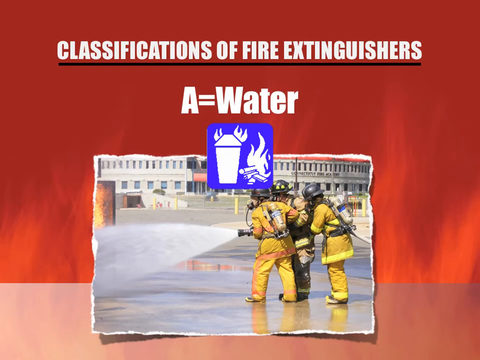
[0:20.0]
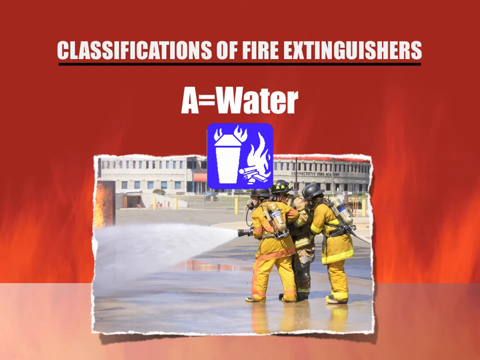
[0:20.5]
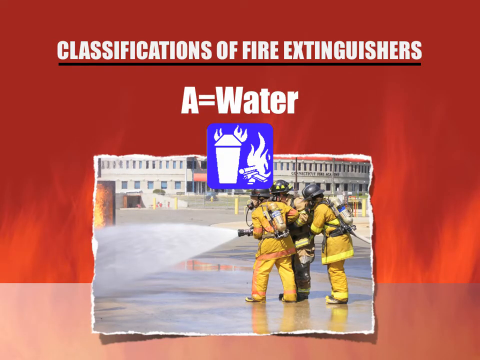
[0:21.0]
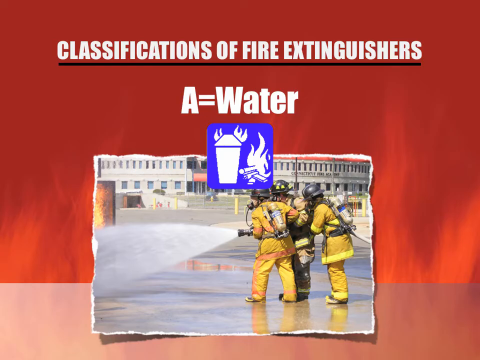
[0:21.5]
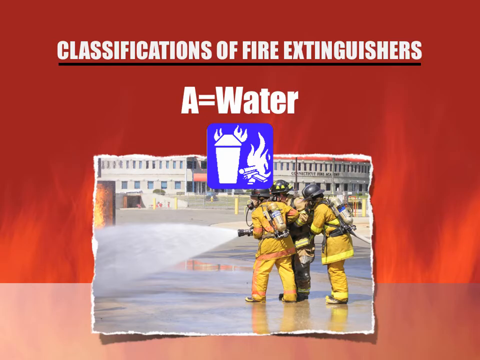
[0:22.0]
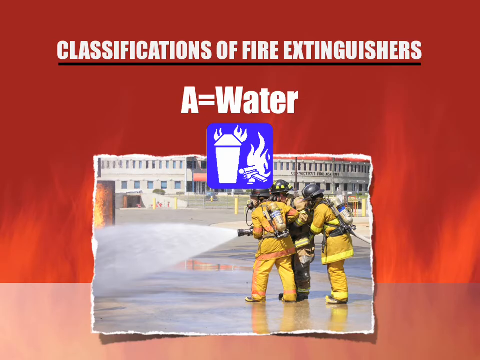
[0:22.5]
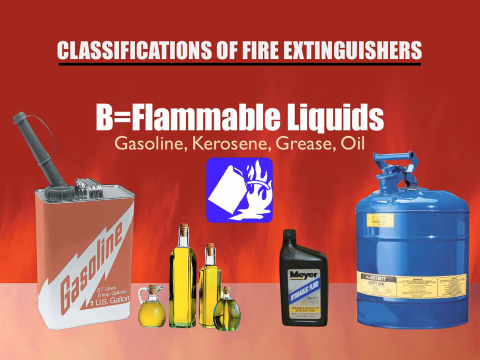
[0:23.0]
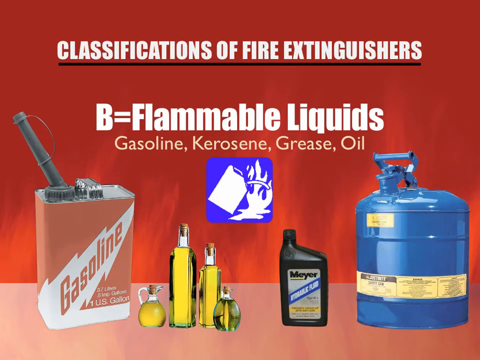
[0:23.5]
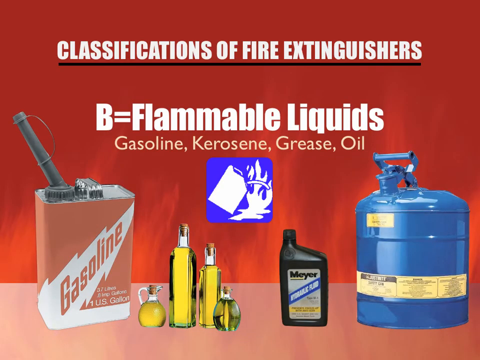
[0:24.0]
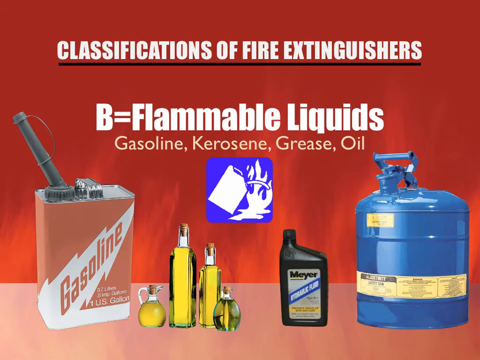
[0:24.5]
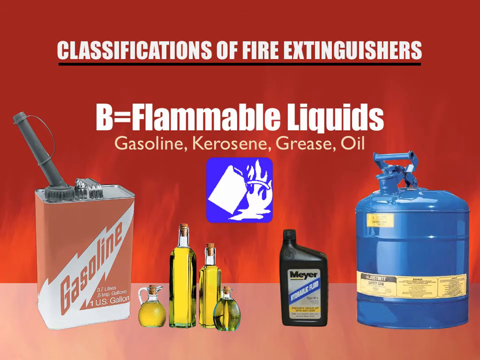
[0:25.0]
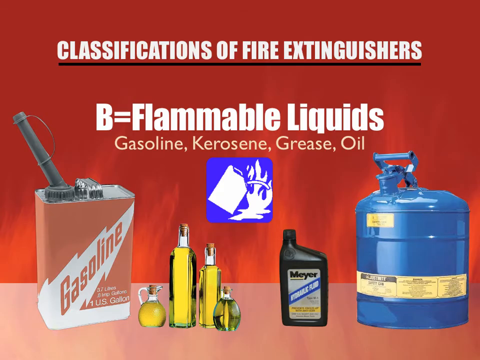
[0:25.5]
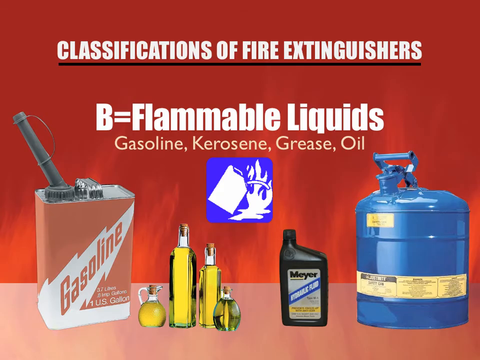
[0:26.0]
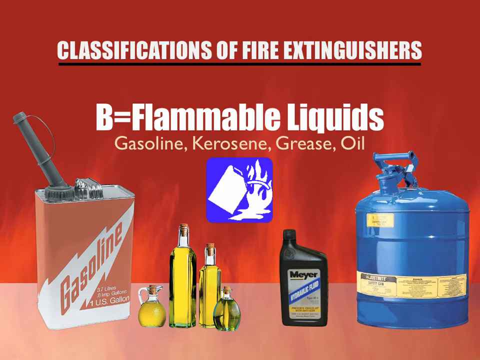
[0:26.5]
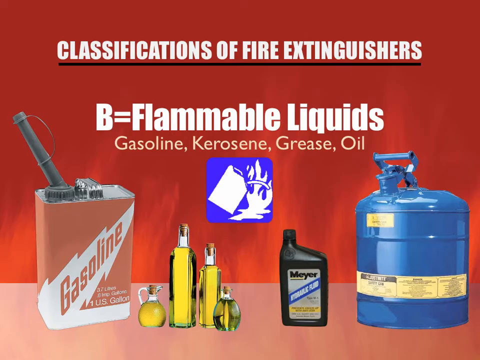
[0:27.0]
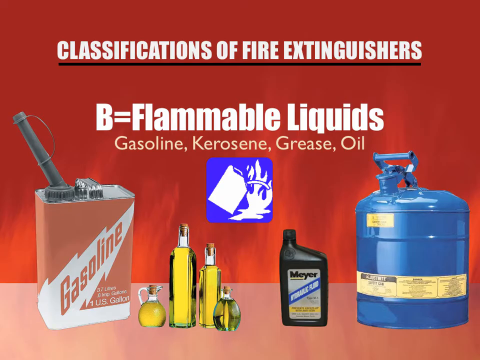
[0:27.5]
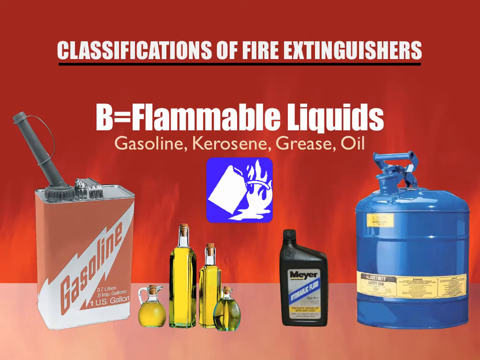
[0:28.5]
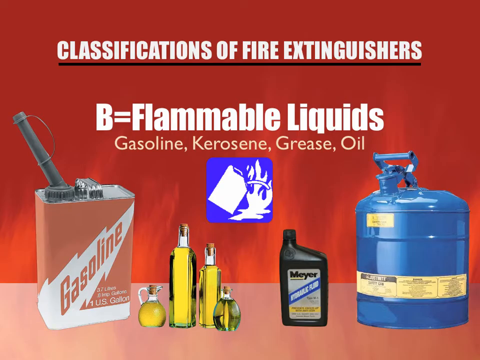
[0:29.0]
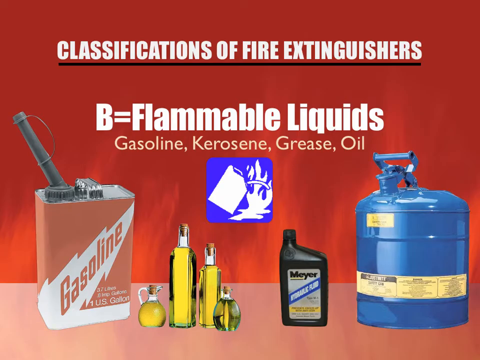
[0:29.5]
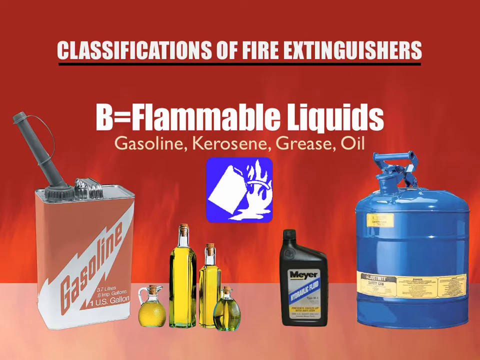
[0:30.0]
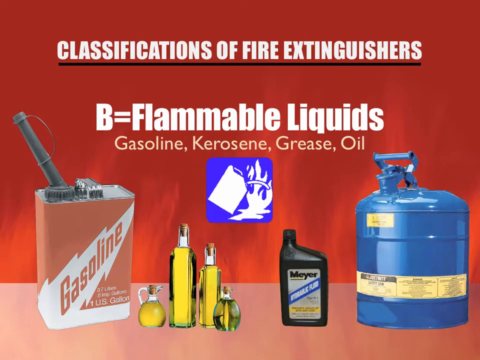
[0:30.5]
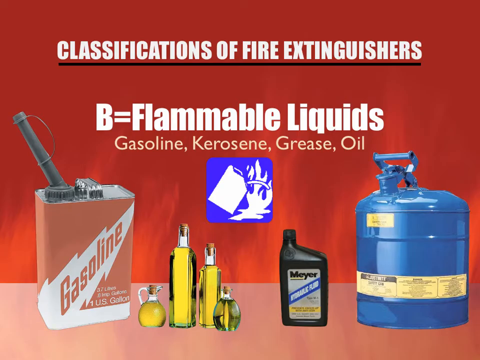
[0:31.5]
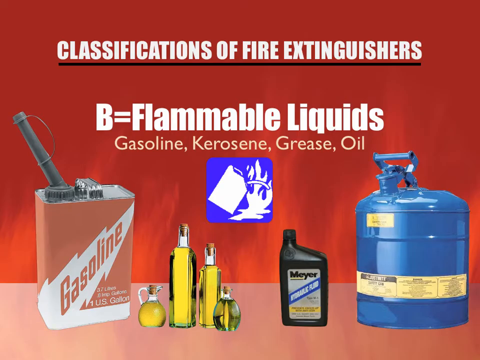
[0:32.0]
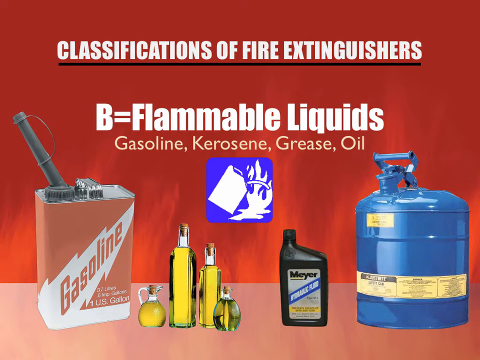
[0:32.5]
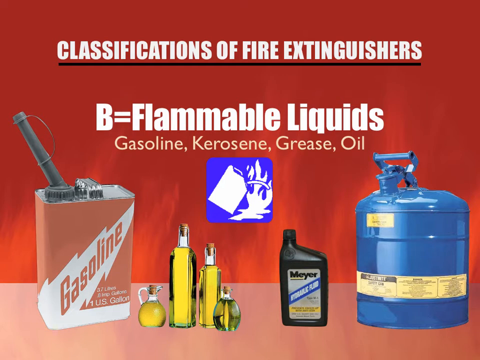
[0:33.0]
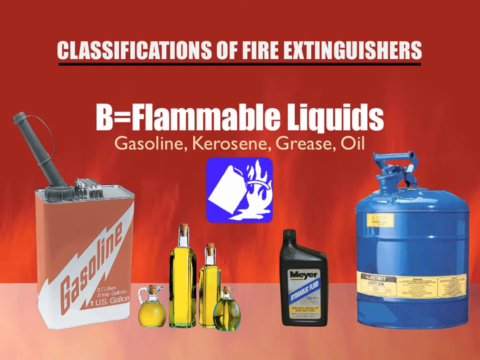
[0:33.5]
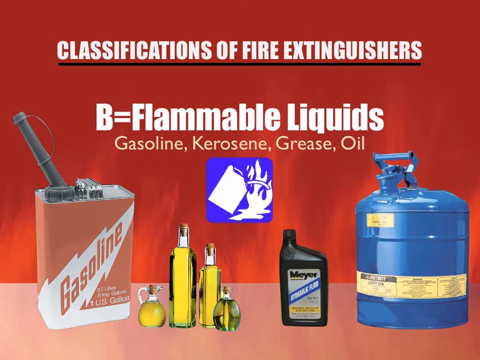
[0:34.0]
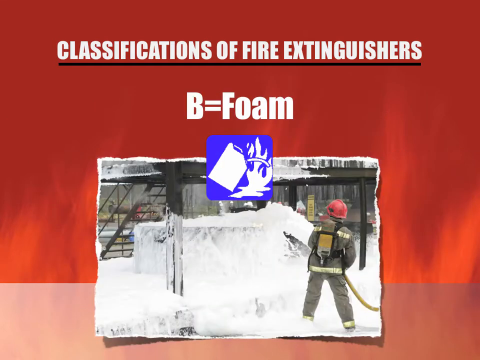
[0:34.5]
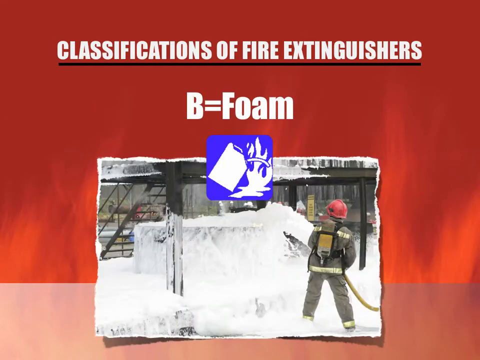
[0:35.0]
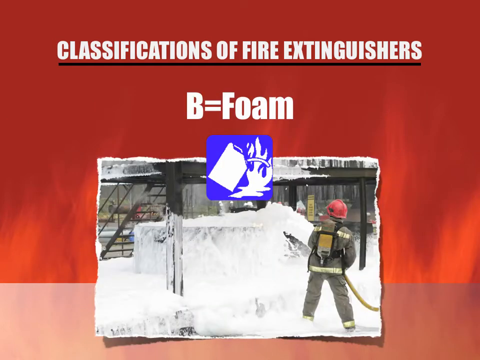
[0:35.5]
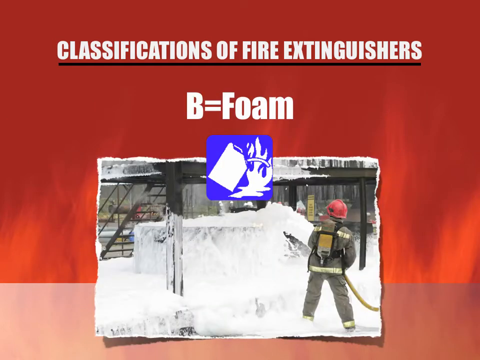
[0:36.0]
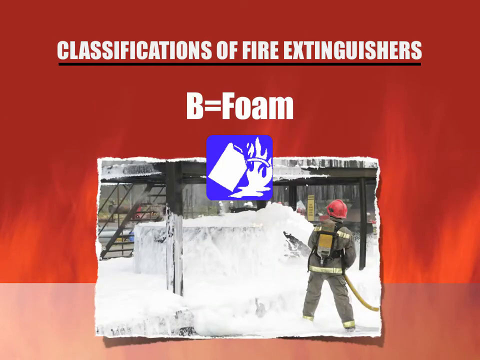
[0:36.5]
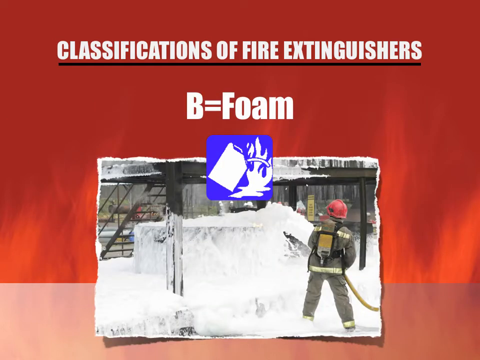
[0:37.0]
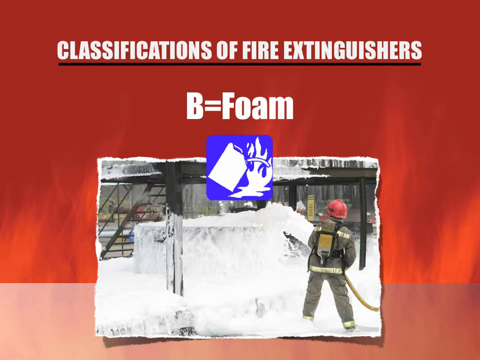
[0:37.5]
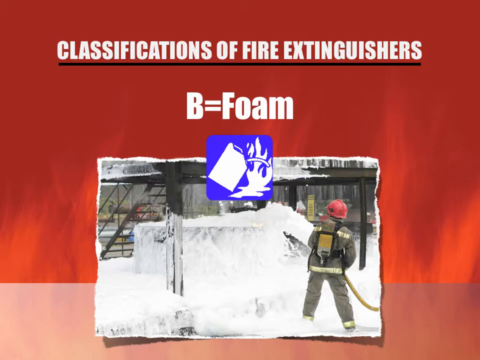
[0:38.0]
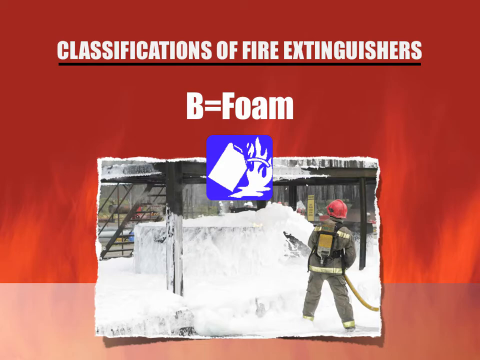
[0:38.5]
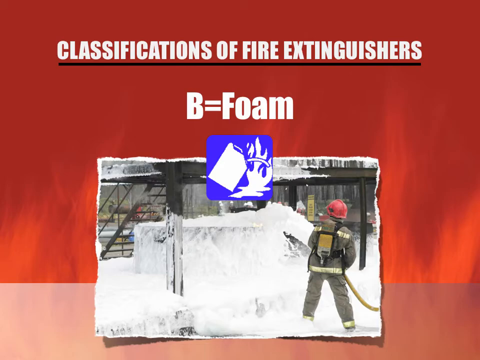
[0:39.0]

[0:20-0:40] Flammable liquids are shown as a cause of fire, with gasoline, kerosene and grease oil listed. Under B there is foam, the foam produced by a fire extinguisher to stop a fire. Gasoline and grease oil are visible.